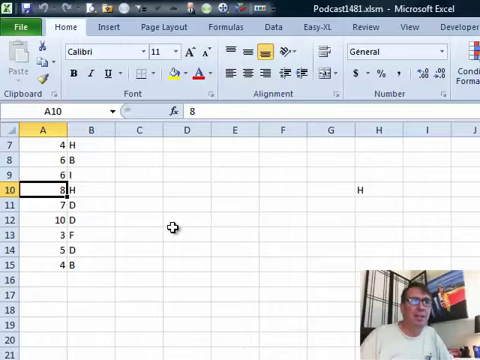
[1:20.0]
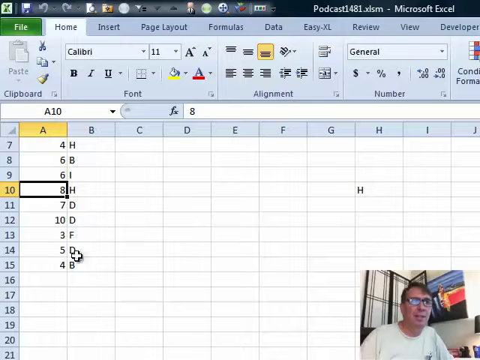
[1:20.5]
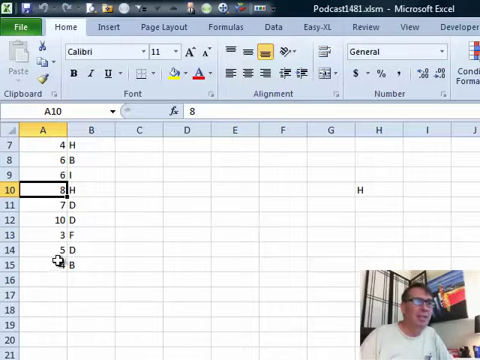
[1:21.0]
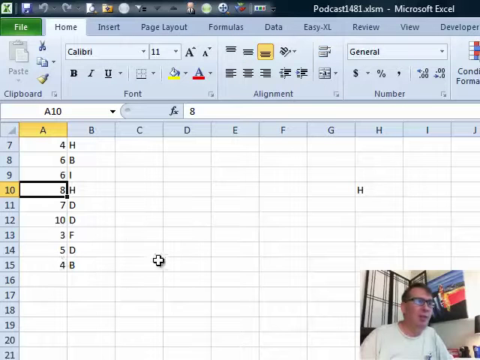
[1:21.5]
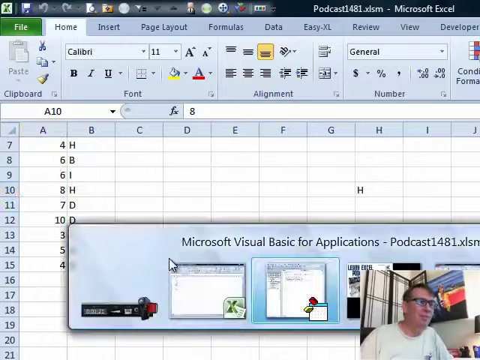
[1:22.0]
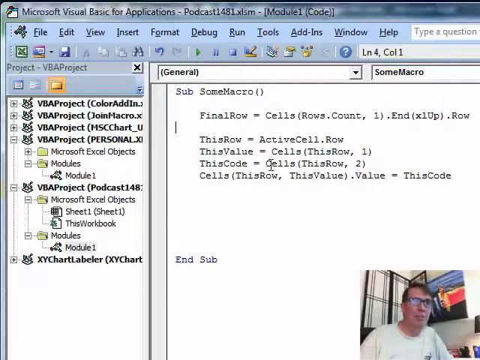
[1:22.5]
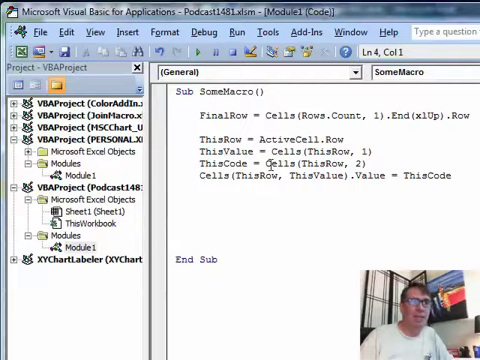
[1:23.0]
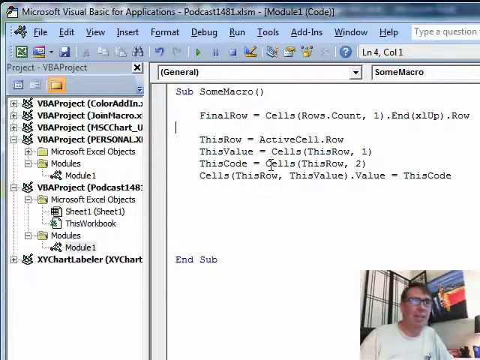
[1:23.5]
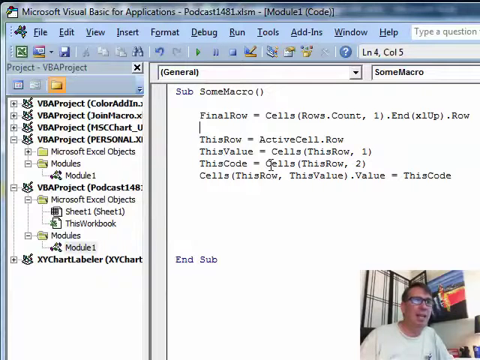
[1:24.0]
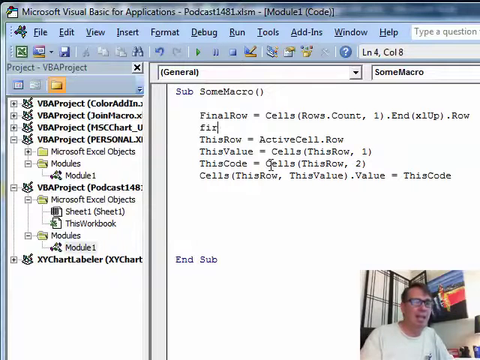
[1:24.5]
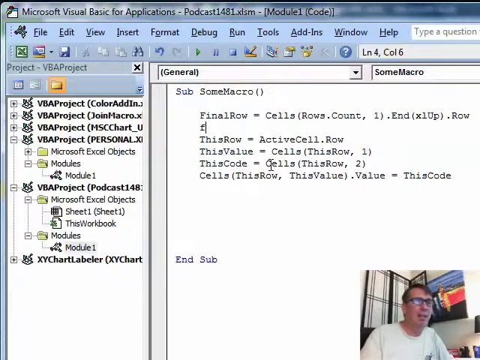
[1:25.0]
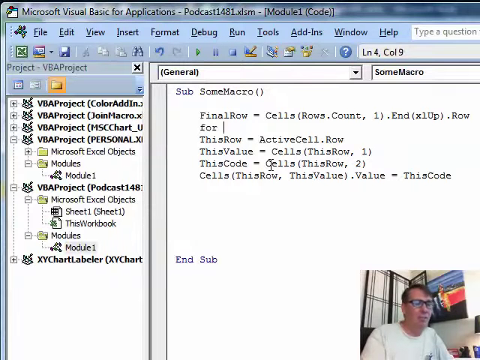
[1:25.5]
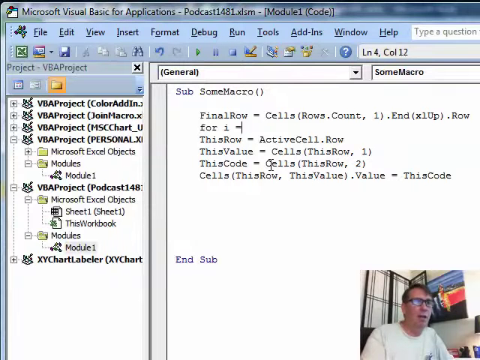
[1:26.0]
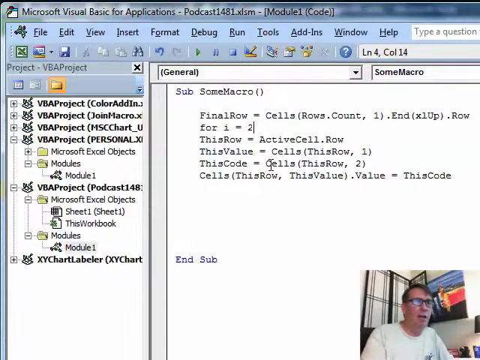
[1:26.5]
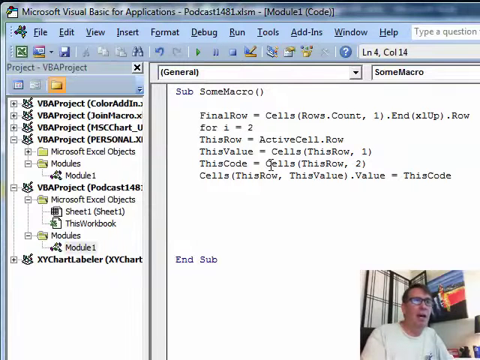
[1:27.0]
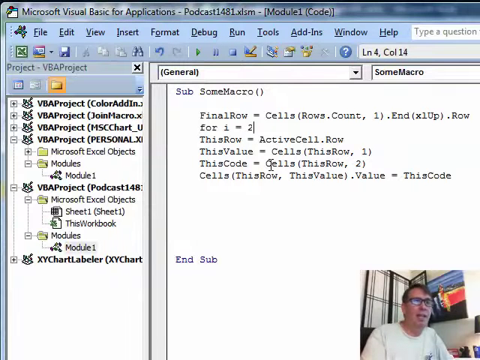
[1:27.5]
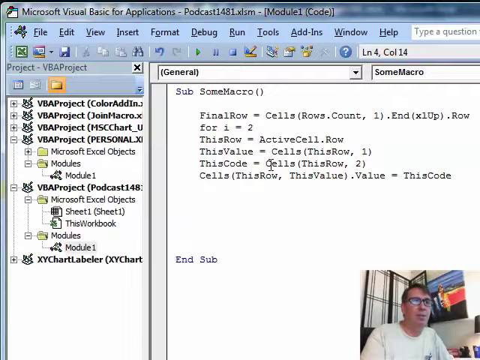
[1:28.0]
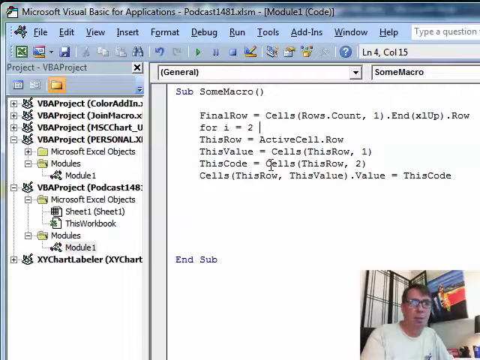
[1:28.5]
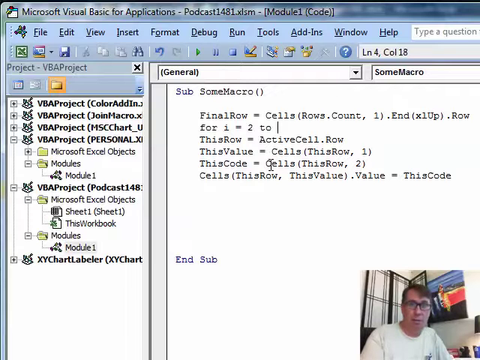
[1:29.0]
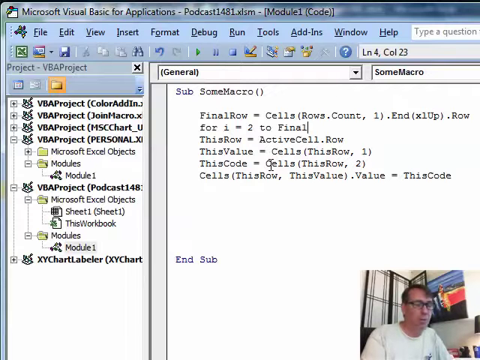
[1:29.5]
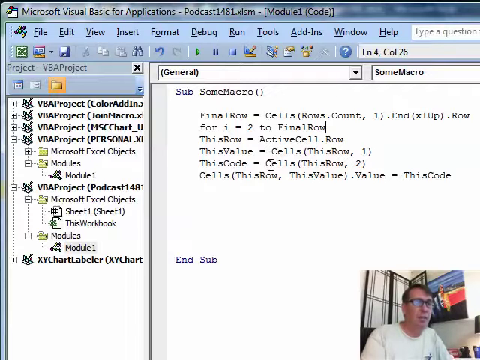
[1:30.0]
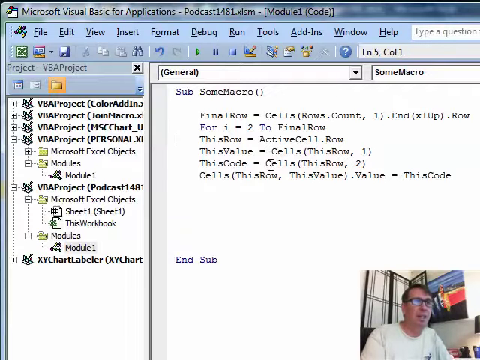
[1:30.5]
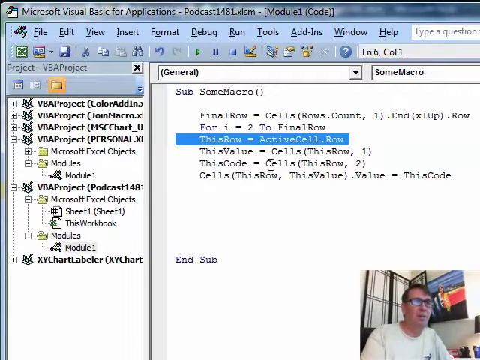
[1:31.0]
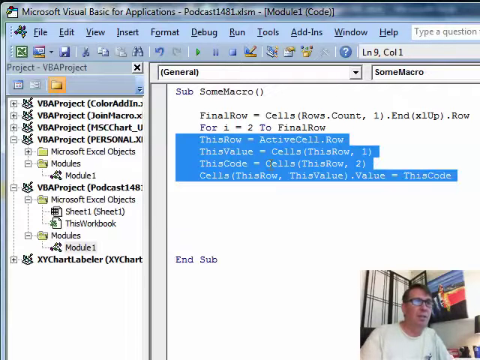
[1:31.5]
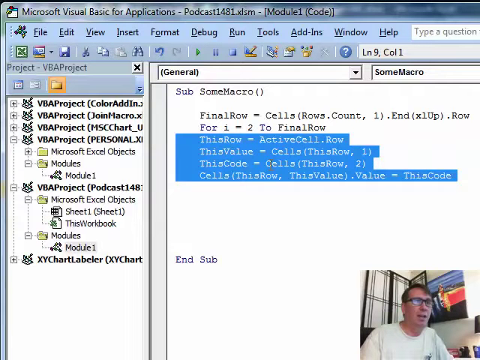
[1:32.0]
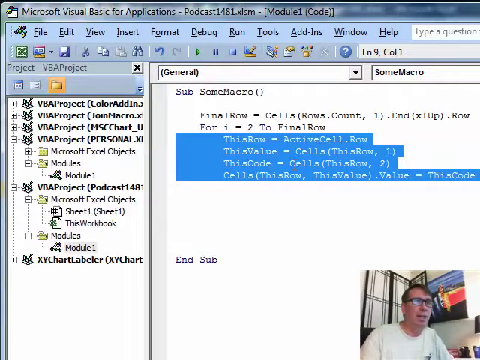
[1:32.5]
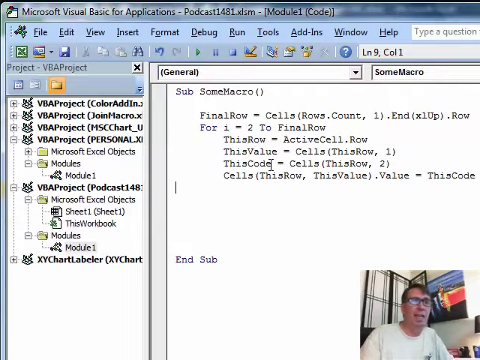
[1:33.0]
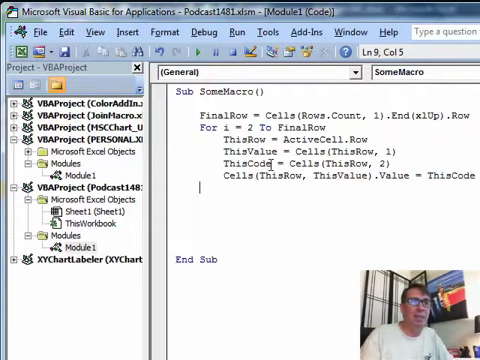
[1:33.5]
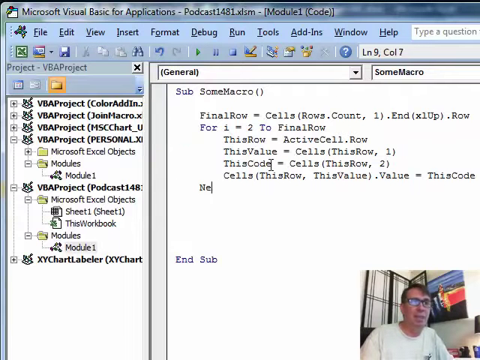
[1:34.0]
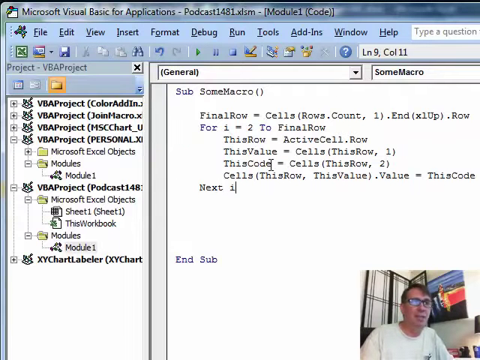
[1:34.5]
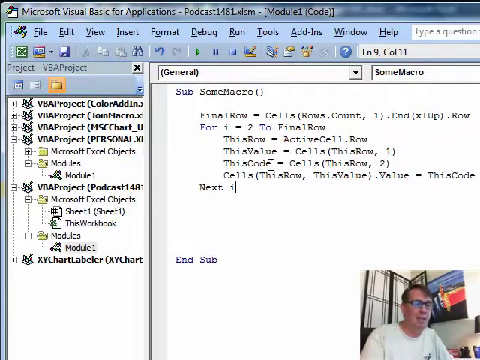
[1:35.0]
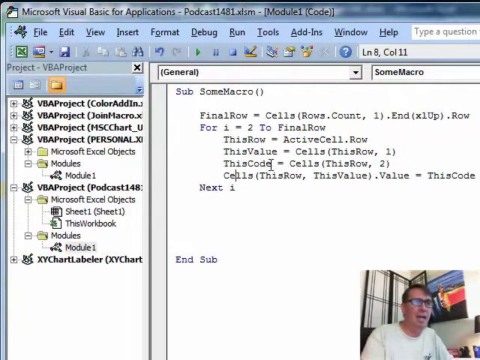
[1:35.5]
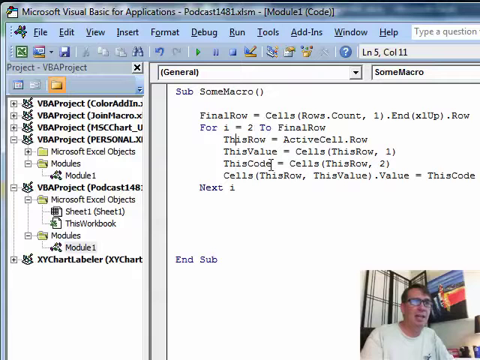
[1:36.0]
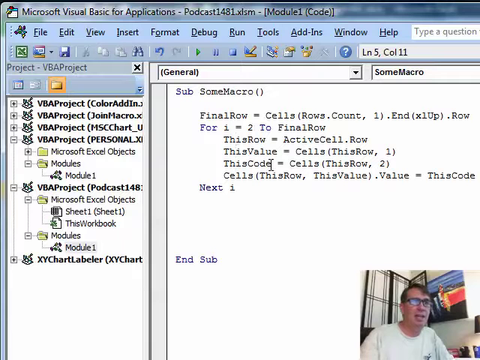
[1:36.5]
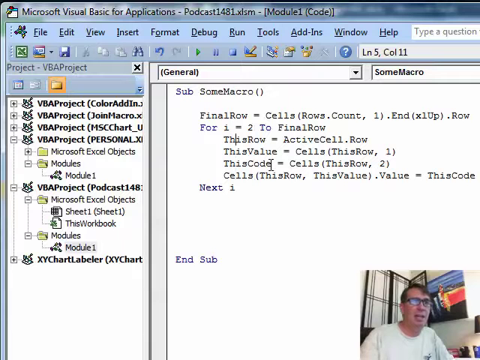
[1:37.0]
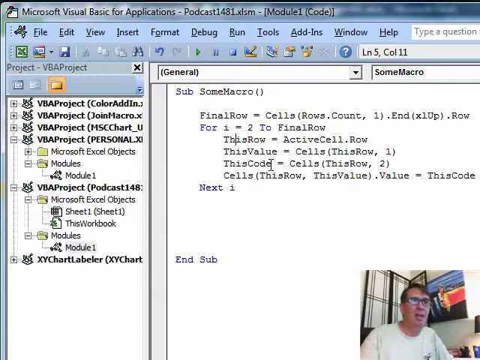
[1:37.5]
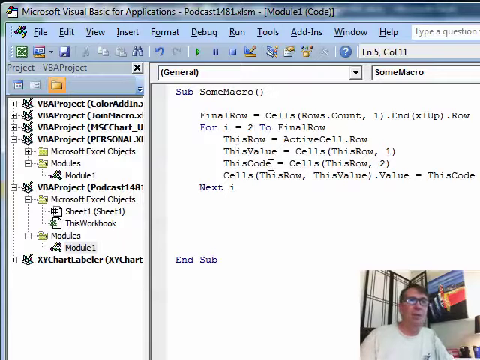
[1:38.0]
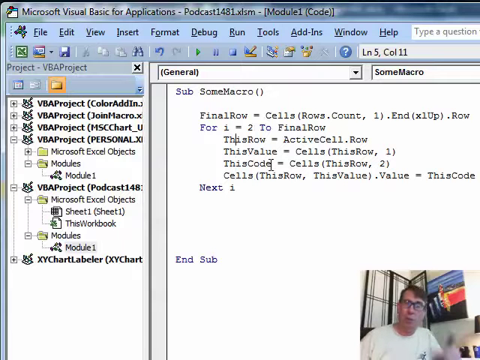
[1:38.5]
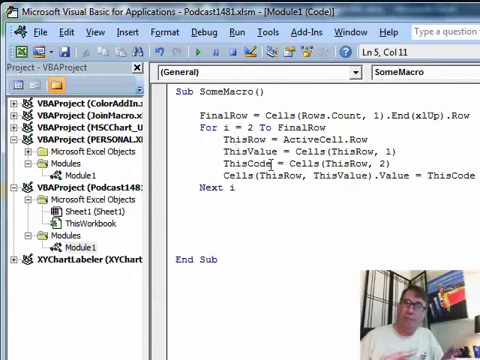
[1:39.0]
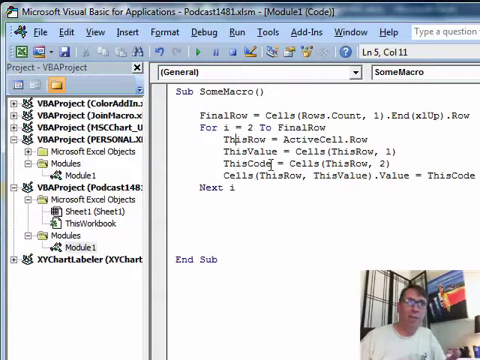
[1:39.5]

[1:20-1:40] The view is back on the spreadsheet, then flips back to the VBA project screen. The man in the picture-in-picture is speaking, teaching how to do macros on a spreadsheet; he is white with dark hair and black glasses. There seems to be some sort of black-and-white door frame or divider behind him, and to the right is a picture with blue, red and black on it. The view keeps switching between the spreadsheet and the VBA project screen. The cursor moves, letters come up, and then he erases some. The view returns to the spreadsheet, where column A has numbers and column B has letters; when a cell is selected, its column and row are highlighted in yellow.